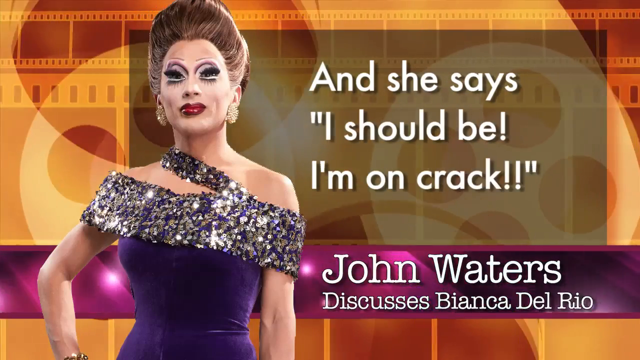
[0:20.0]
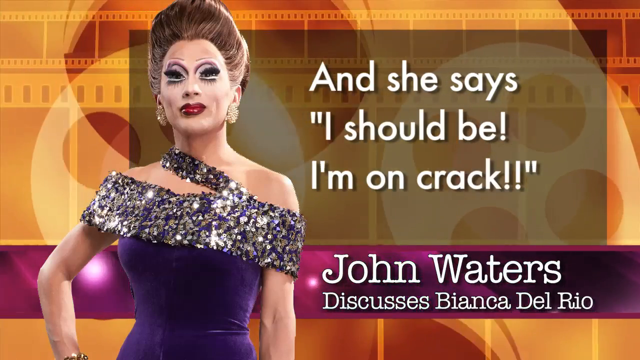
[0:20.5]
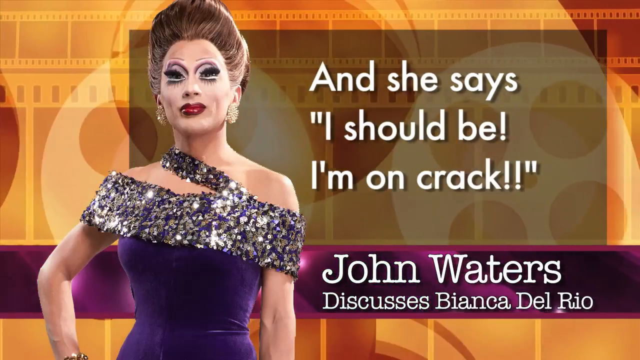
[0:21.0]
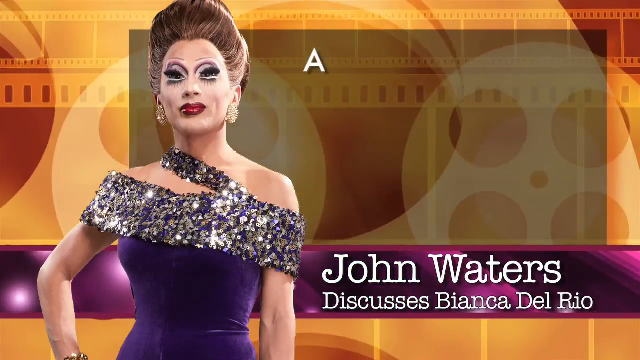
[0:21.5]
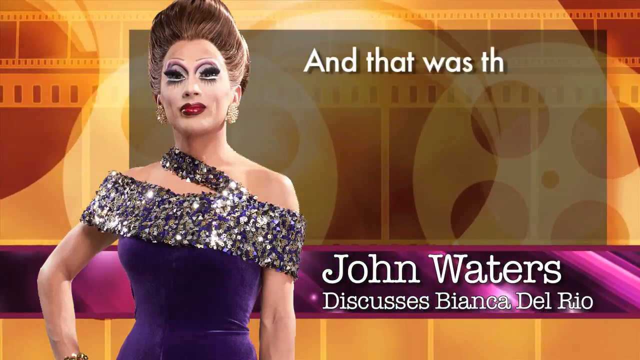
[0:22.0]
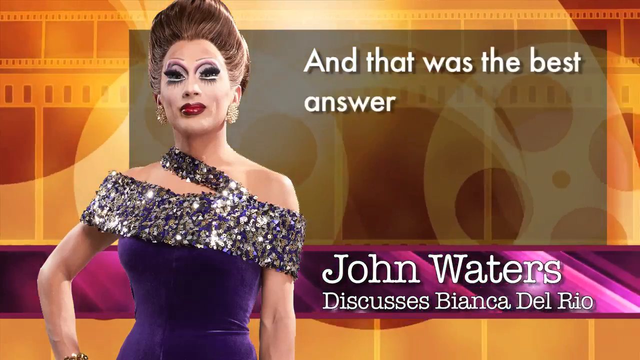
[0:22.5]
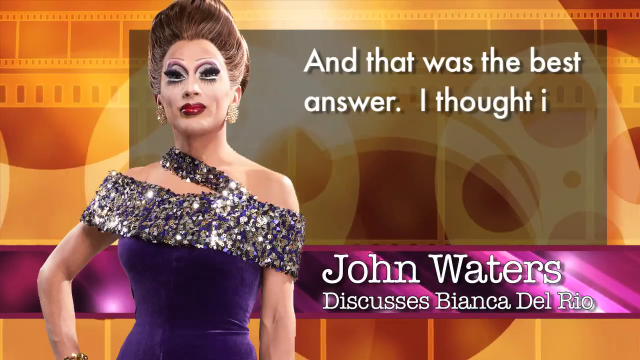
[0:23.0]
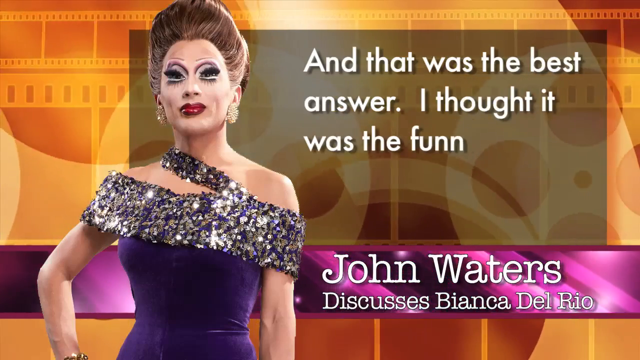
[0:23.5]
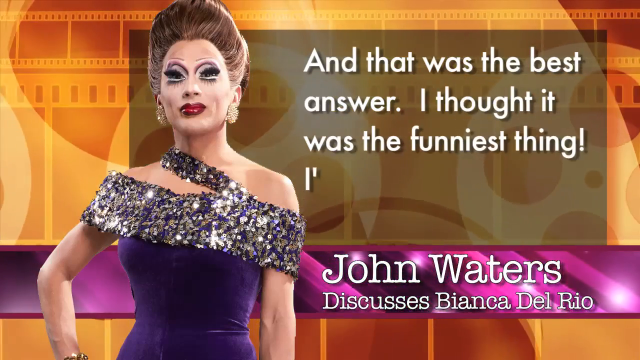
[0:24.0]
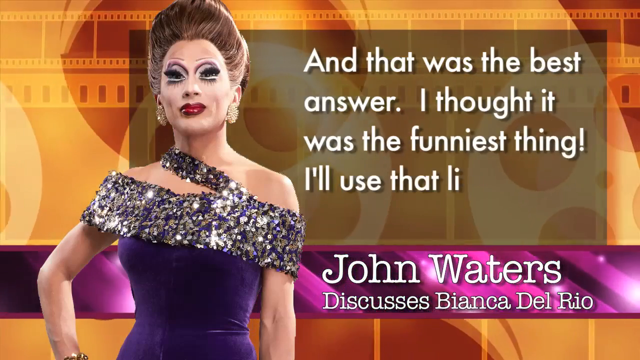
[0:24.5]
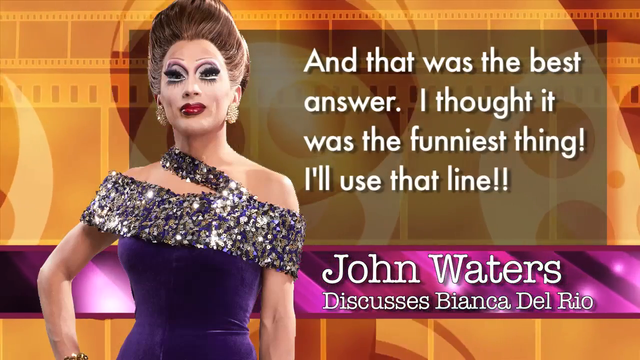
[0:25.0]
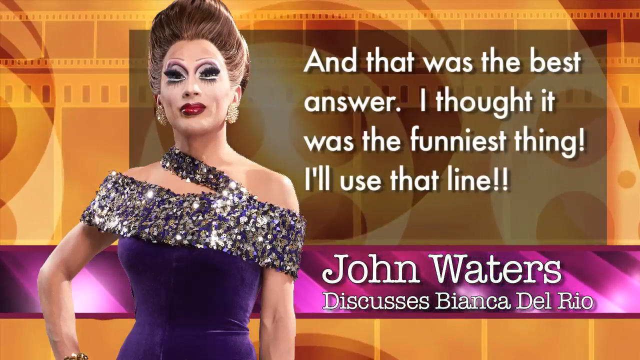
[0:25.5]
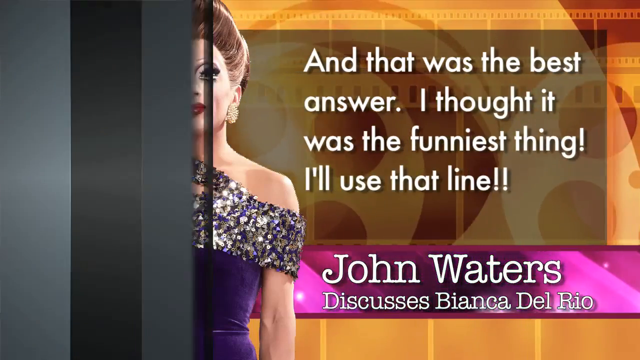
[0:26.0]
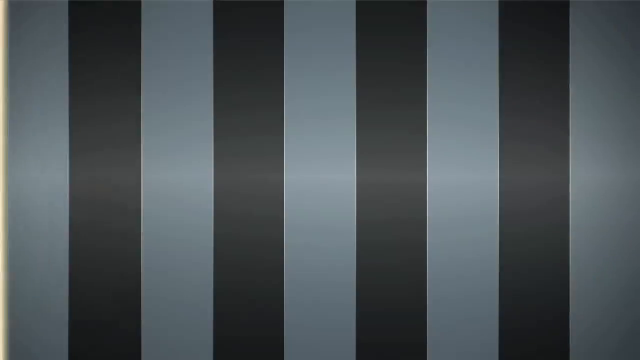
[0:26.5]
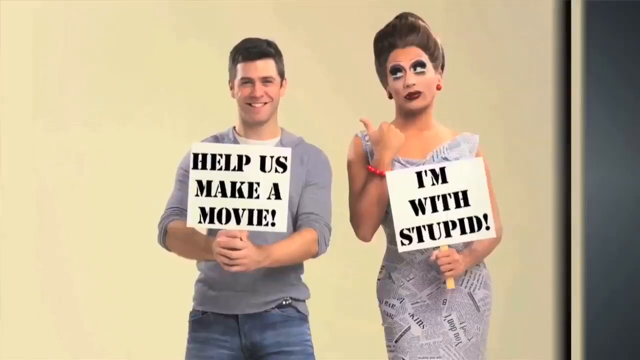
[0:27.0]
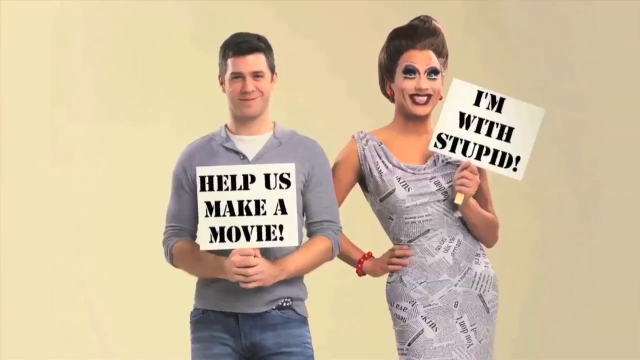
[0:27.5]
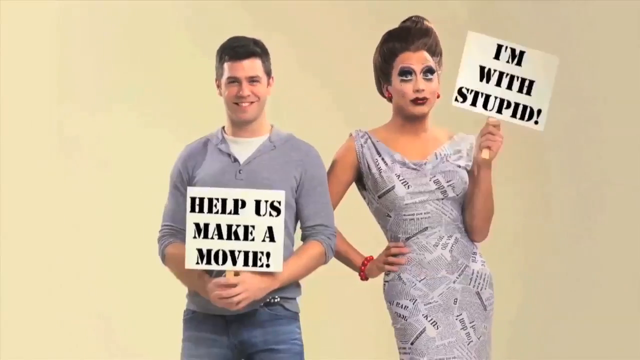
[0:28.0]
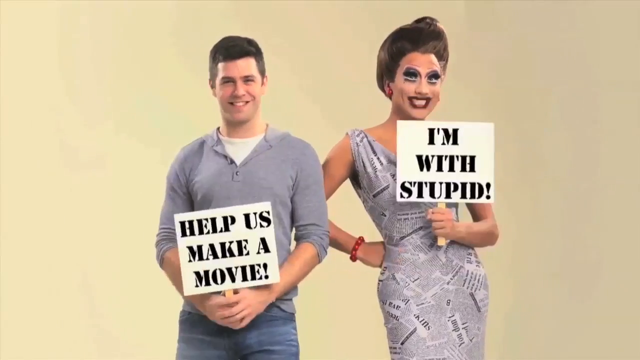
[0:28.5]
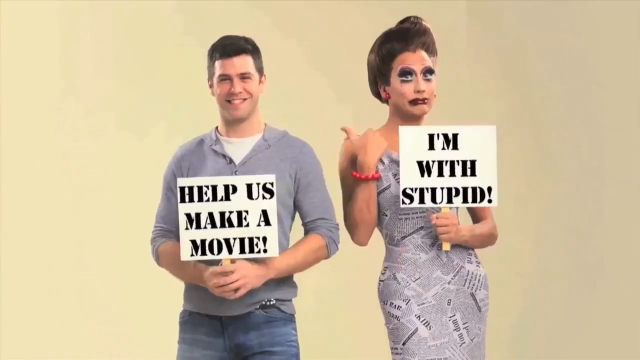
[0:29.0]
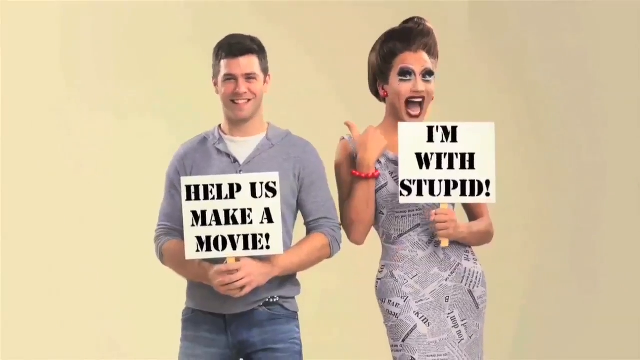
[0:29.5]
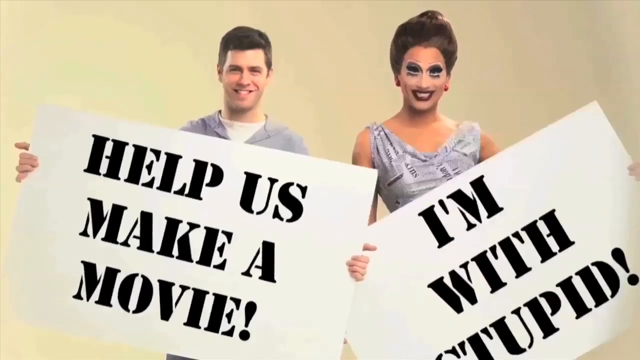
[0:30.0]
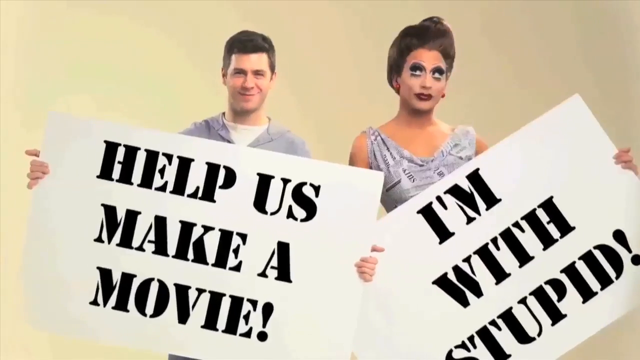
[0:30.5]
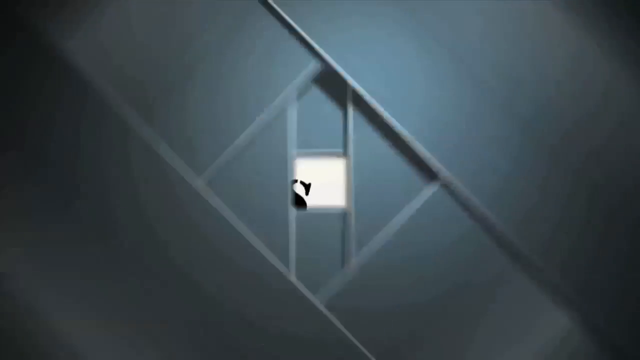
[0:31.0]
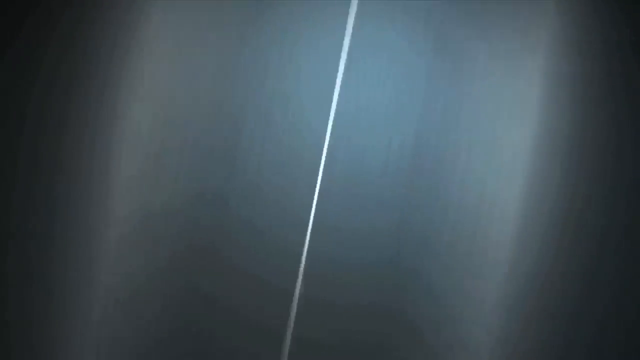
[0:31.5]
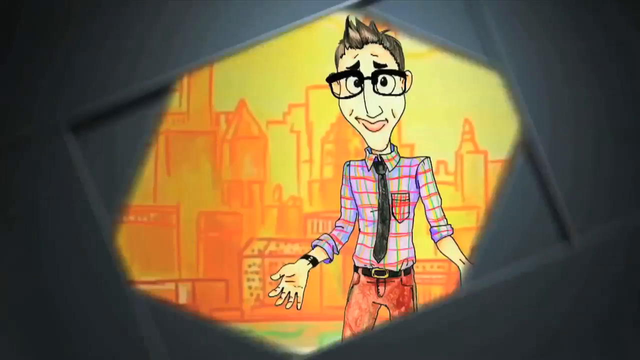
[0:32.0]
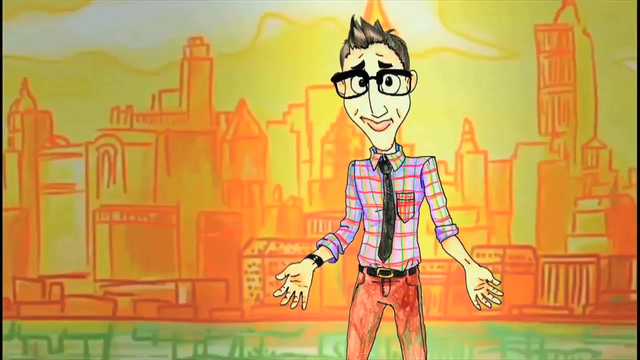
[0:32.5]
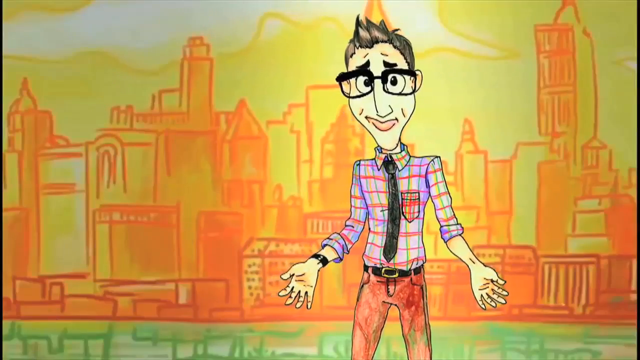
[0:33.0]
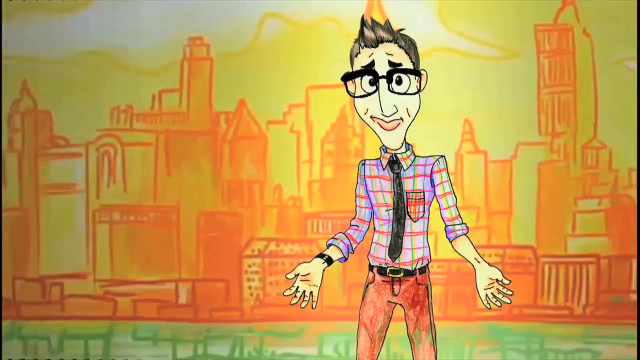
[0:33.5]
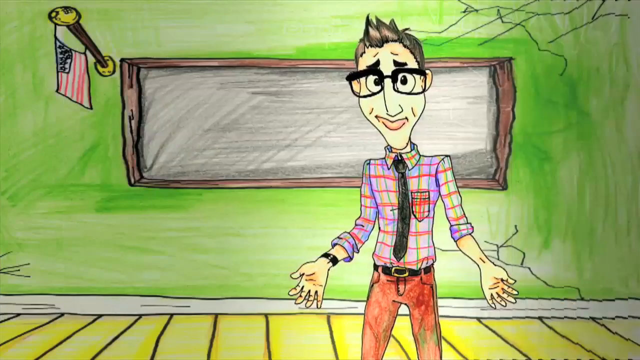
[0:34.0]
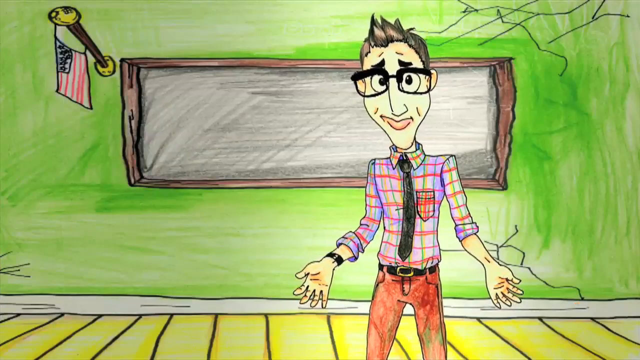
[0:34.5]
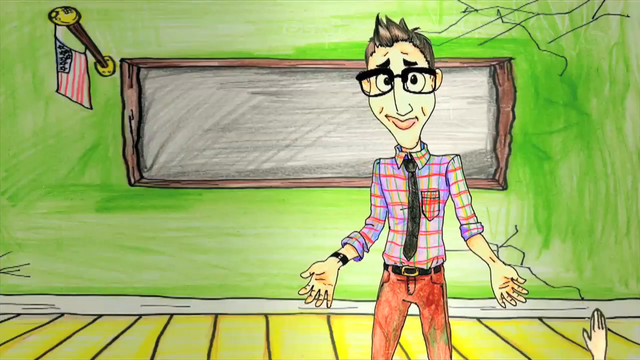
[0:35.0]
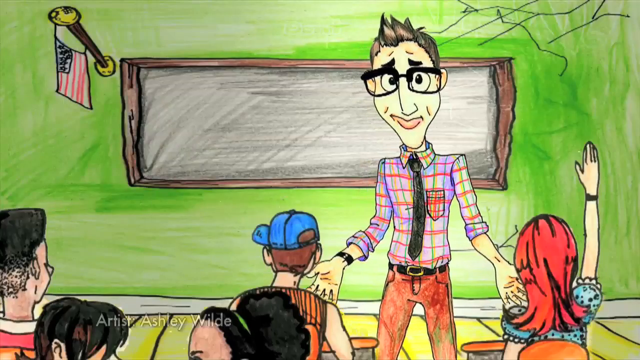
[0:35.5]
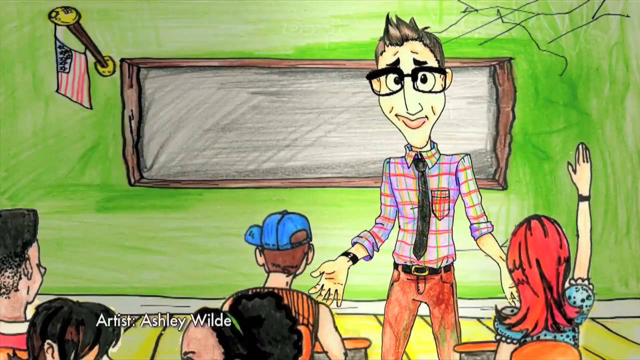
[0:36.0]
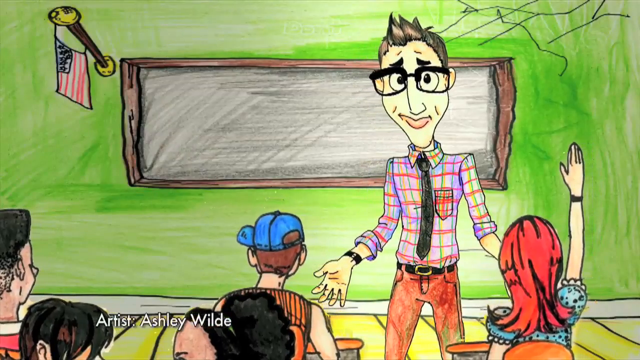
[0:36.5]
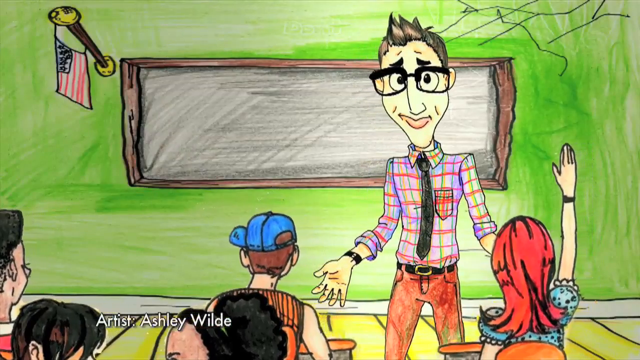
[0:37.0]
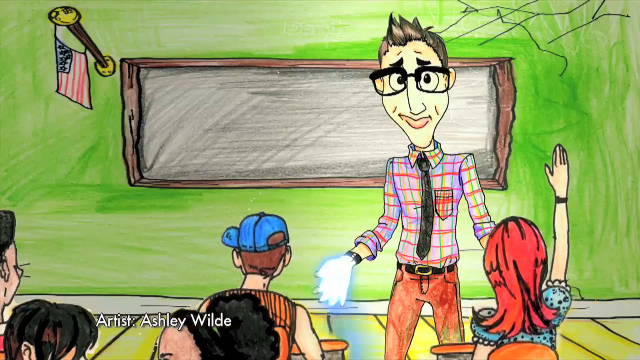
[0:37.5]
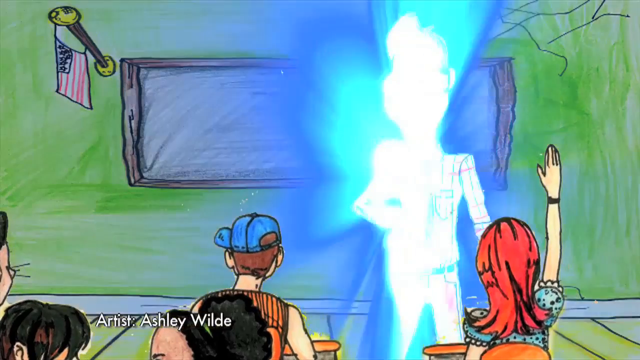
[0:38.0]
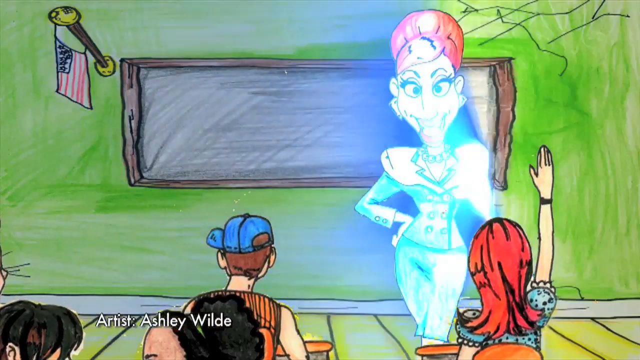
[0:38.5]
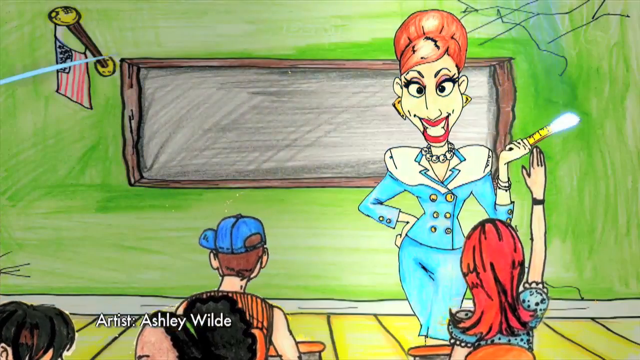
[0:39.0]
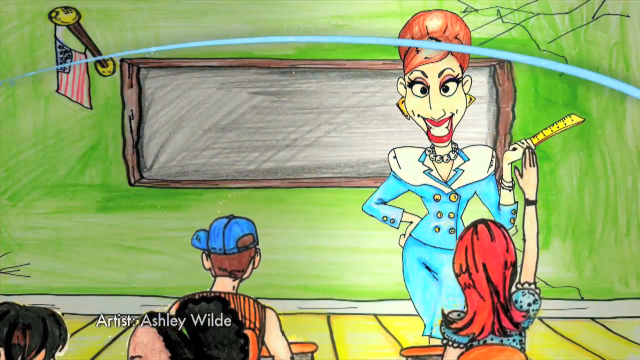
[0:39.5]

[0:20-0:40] The quote continues on screen: one line reads "I should be!" and the next line reads "I'm on crack!!", apparently with the person shown on the left side of the quote. The text then reads "and that was the best answer. I thought it was the funniest thing!" and "I'll use that line!!" The text switches off, and a guy on the left holds a sign that says "help us make a movie", while the other person, apparently a transgender woman, holds up a banner that says "I'm with stupid". They are both smiling, and the signs get bigger. Then there is what appears to be an animated image of a teacher in a classroom.